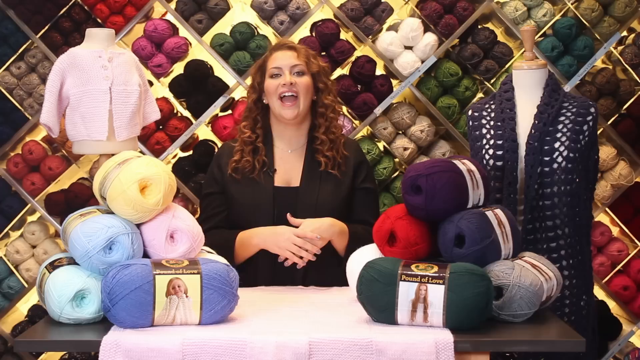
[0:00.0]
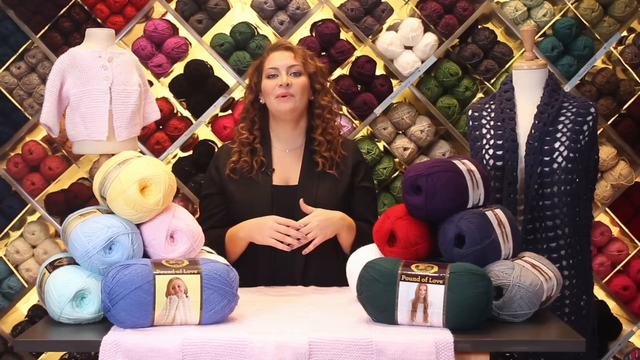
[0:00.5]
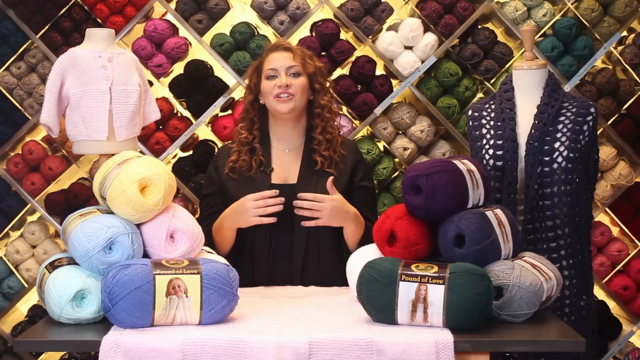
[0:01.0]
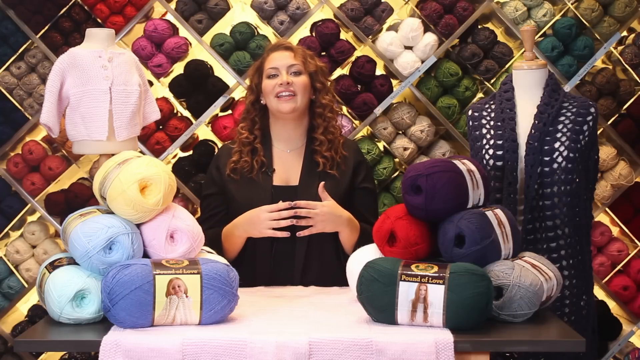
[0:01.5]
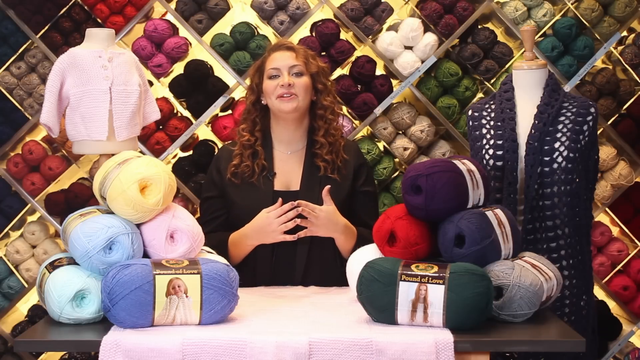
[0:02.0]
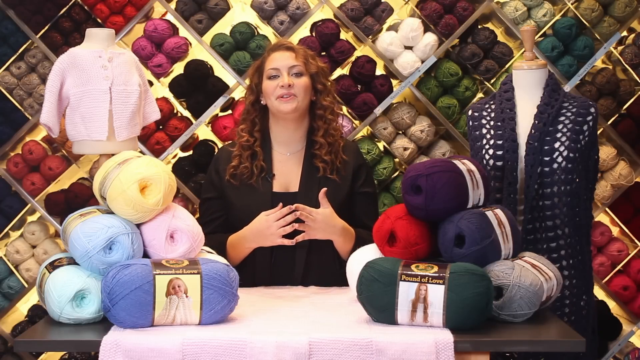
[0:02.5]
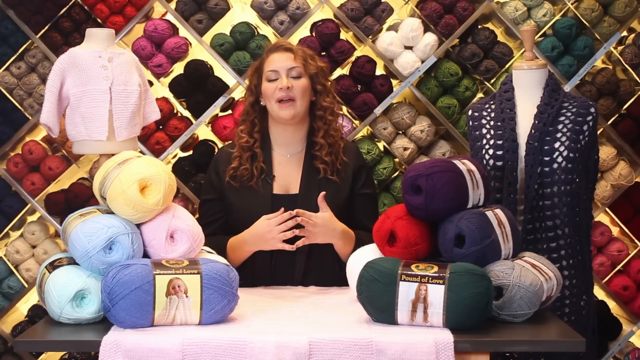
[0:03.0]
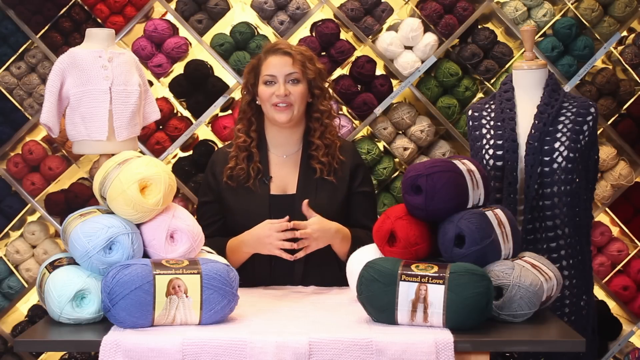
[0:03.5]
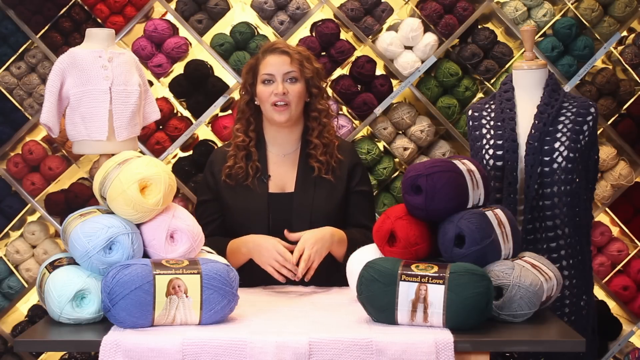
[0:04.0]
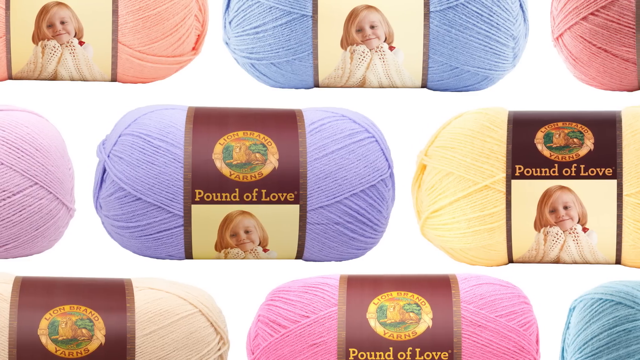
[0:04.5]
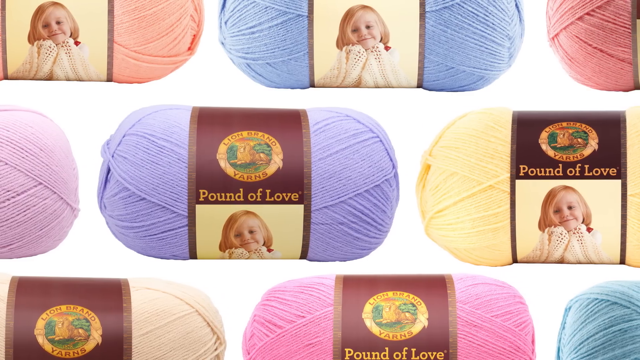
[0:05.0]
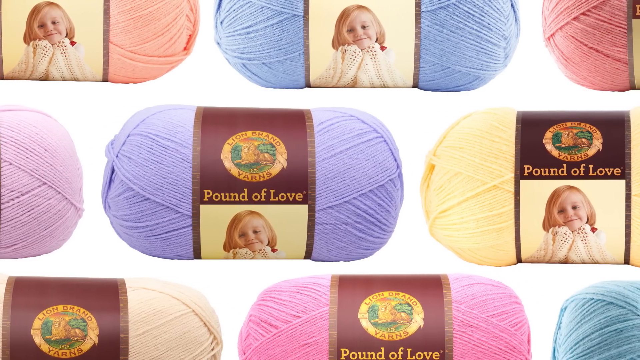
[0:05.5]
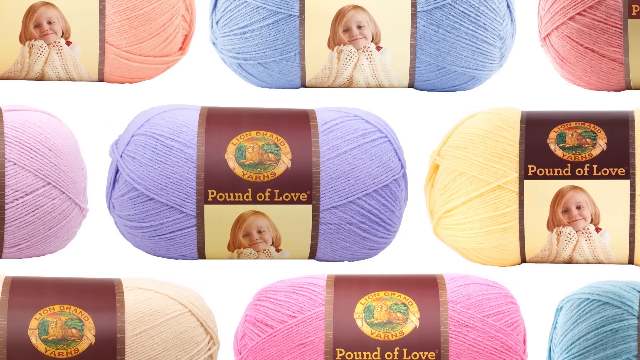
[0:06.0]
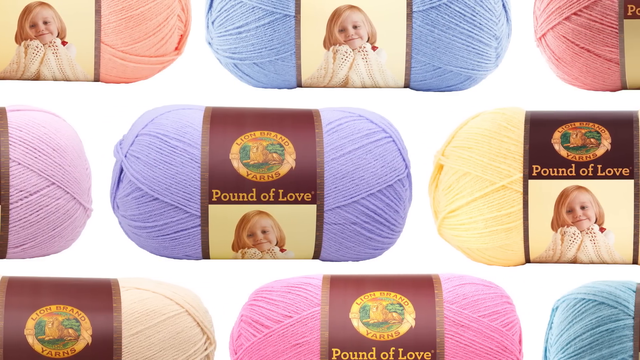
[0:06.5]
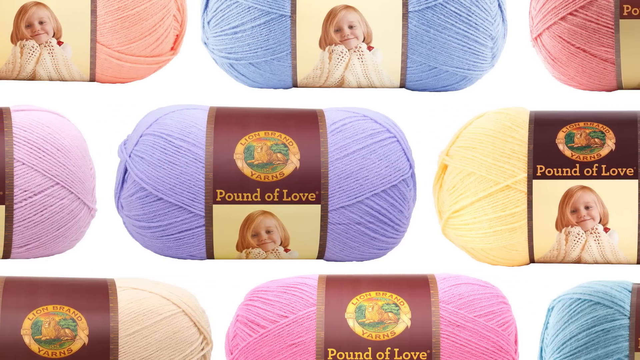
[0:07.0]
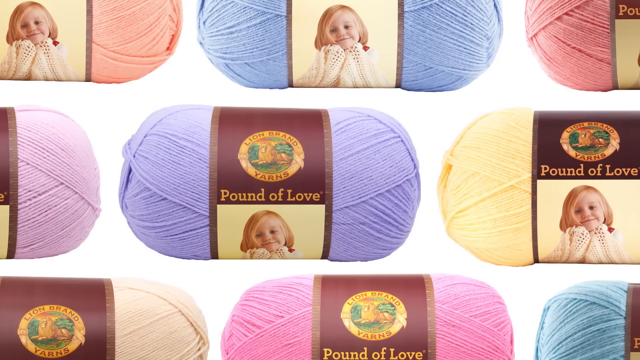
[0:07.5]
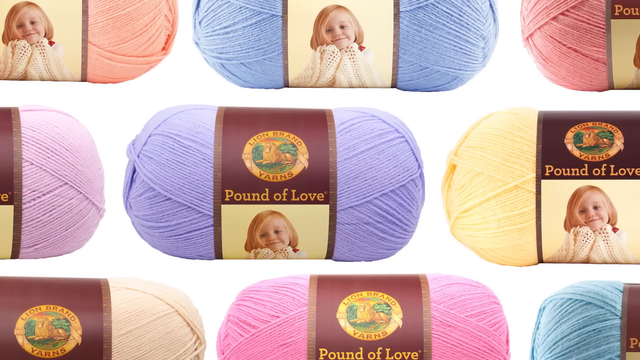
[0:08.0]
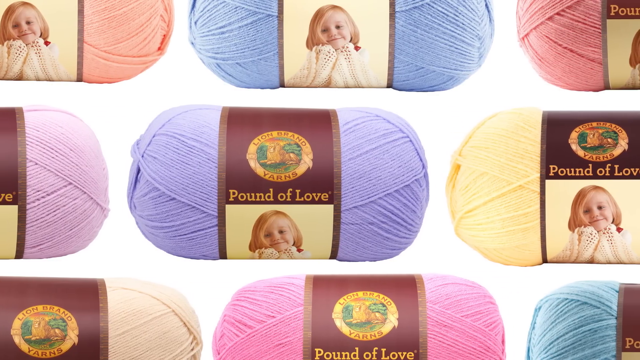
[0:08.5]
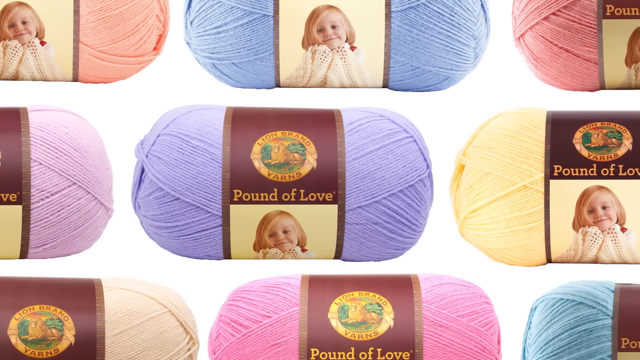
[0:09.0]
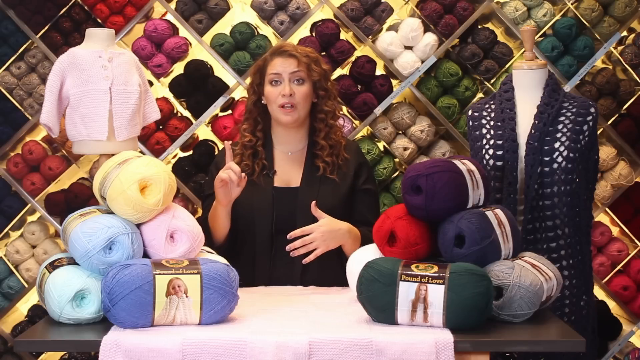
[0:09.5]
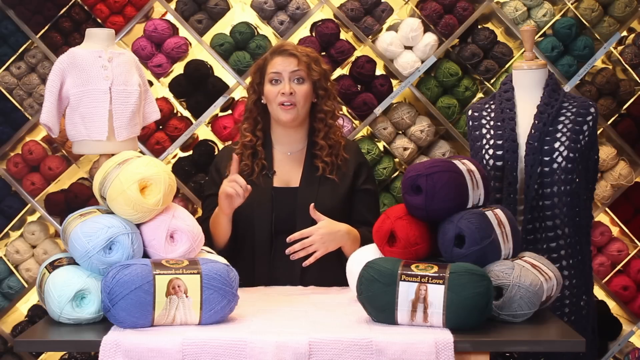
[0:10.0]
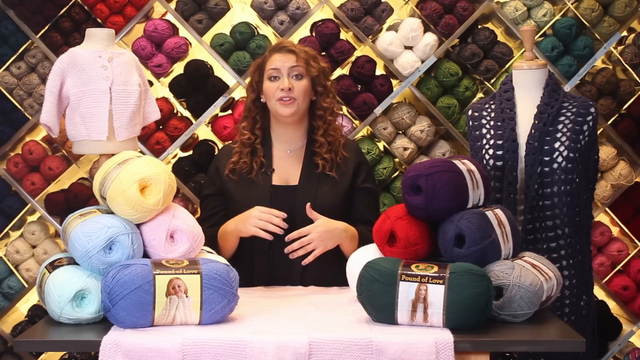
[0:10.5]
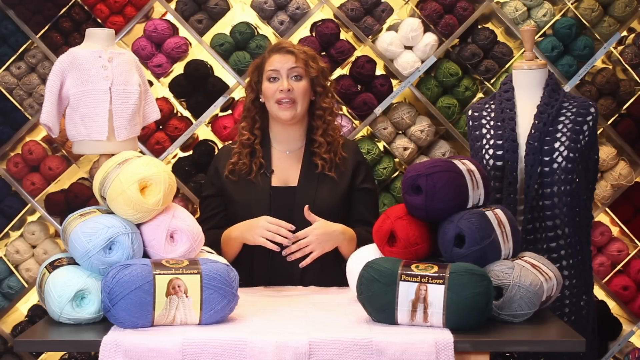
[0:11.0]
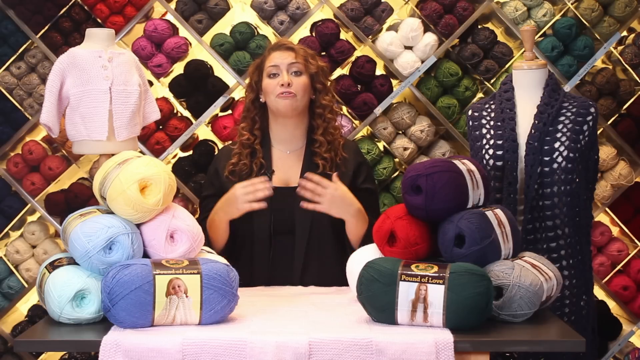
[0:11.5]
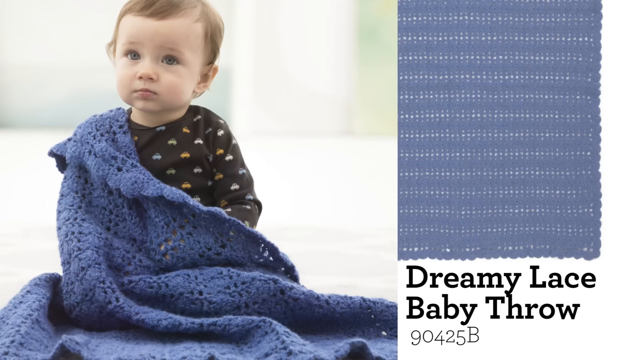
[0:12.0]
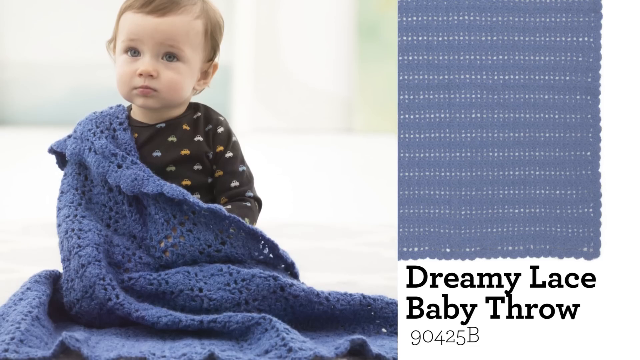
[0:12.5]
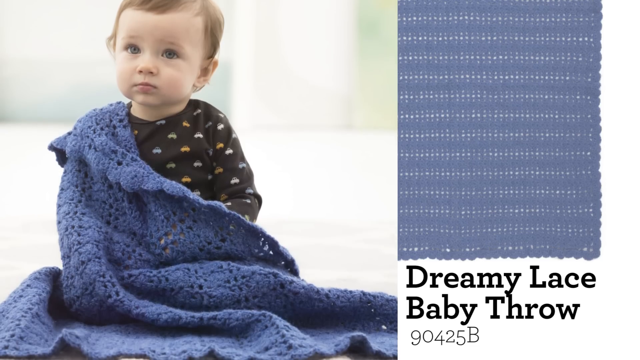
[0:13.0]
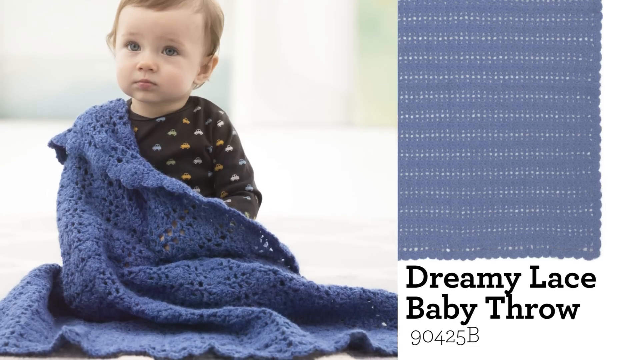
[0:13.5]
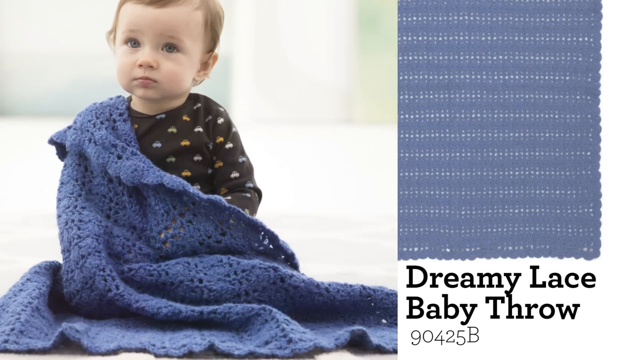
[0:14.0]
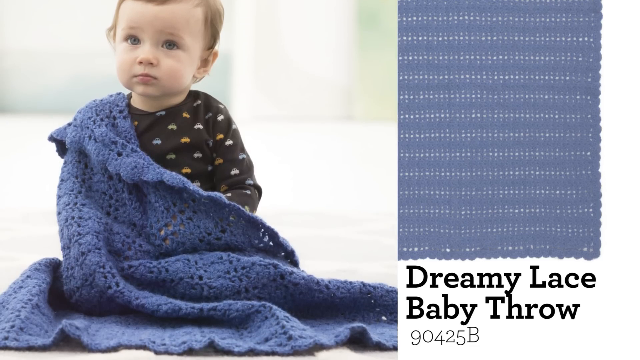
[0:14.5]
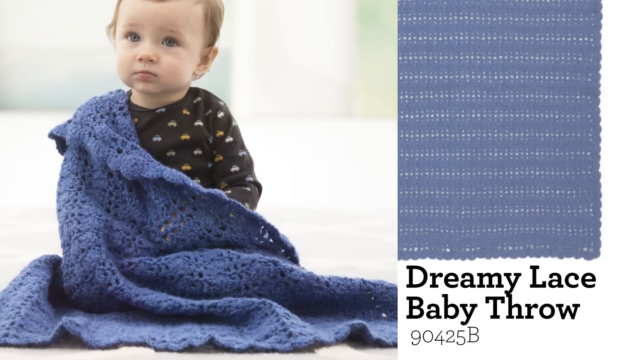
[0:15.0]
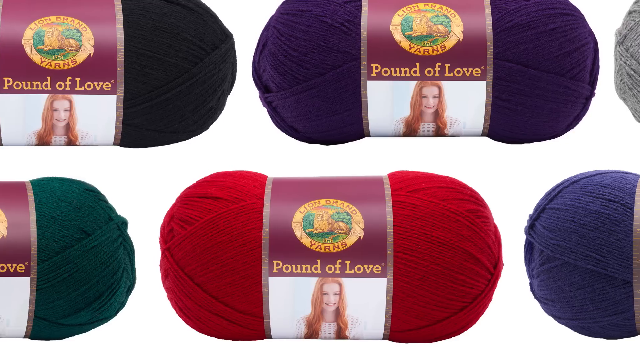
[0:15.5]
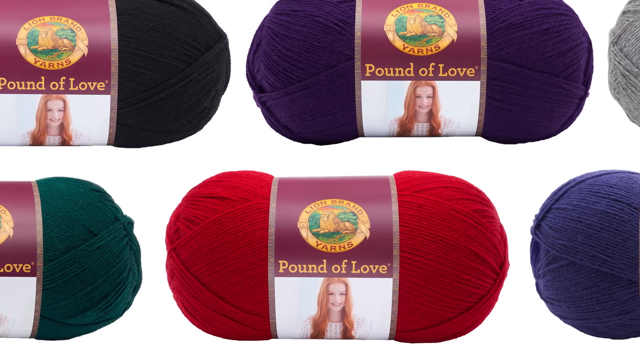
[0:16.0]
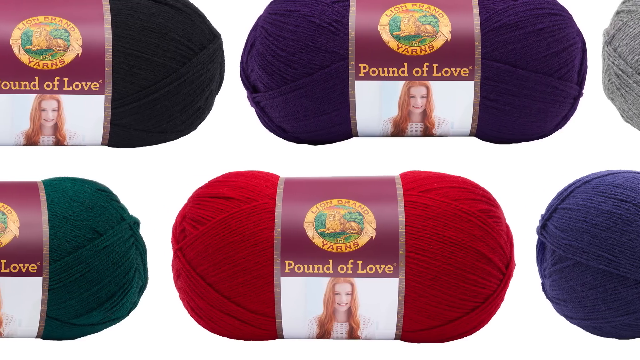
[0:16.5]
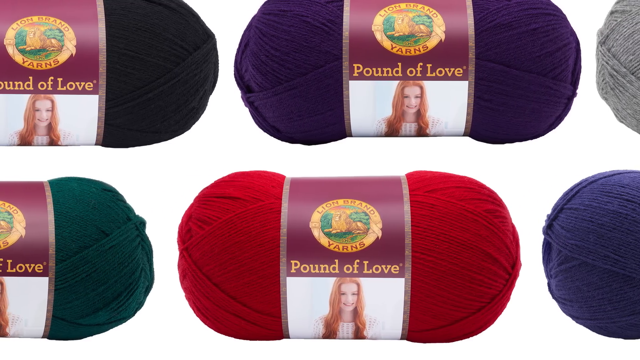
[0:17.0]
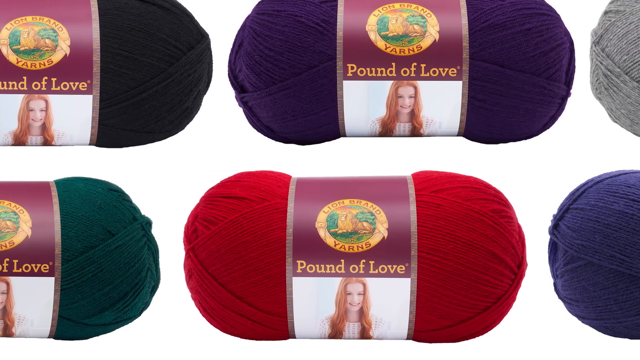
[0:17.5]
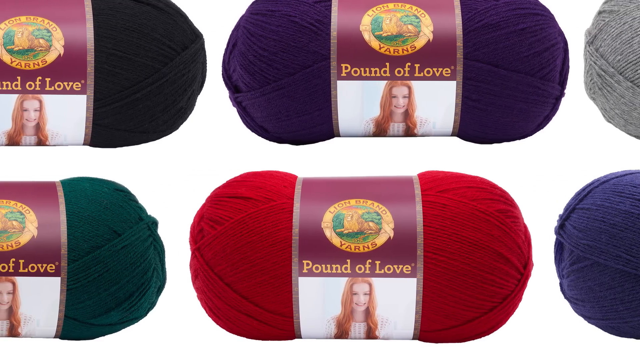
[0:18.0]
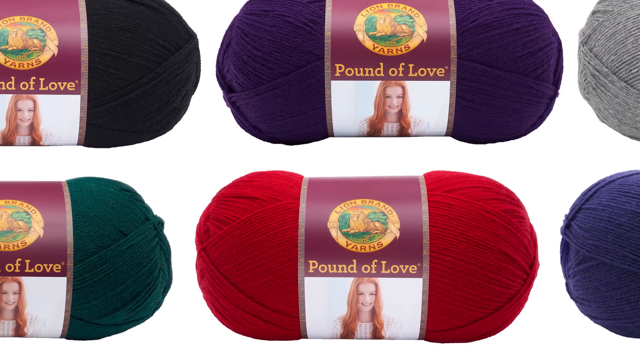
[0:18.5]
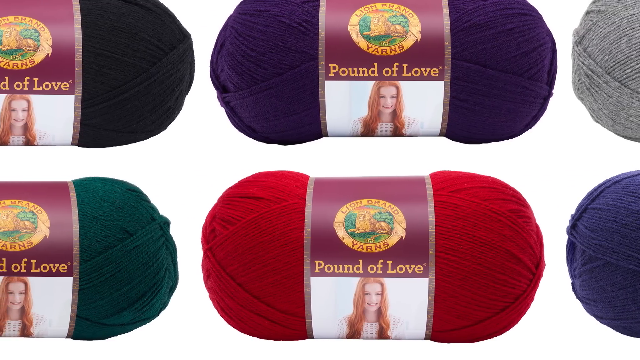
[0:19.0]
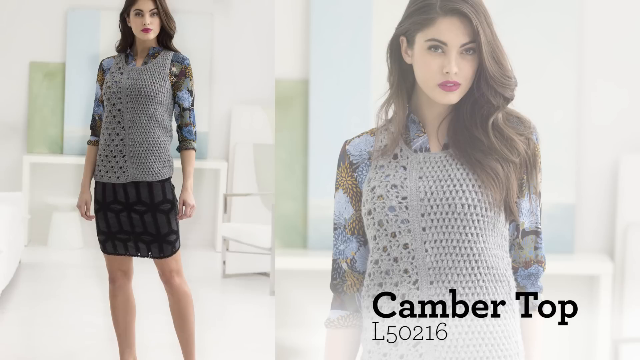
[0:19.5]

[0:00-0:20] Different types of yarn are shown, among them a Pound Love brand yarn, and the subject is knitting. A lady is sitting in a knitting room that is being used as a business for making clothes and other items. The knitting wool comes in different colours: pink, red, blue, purple and other bright colours, plus the darker navy blue and black.